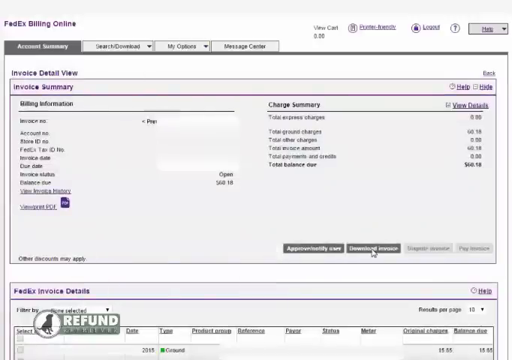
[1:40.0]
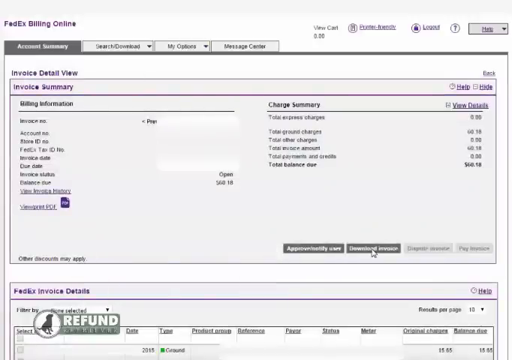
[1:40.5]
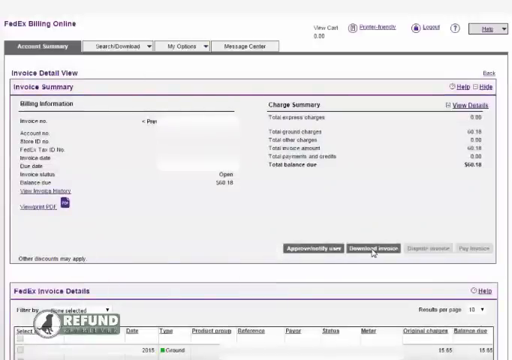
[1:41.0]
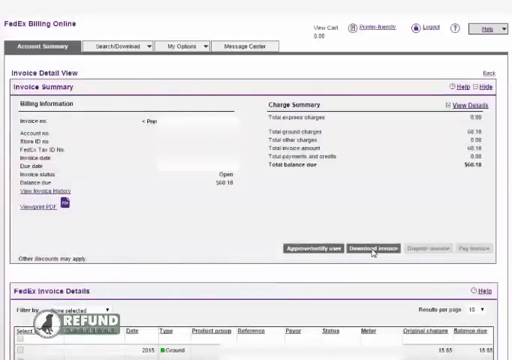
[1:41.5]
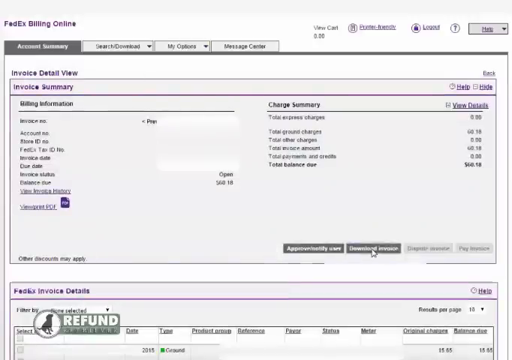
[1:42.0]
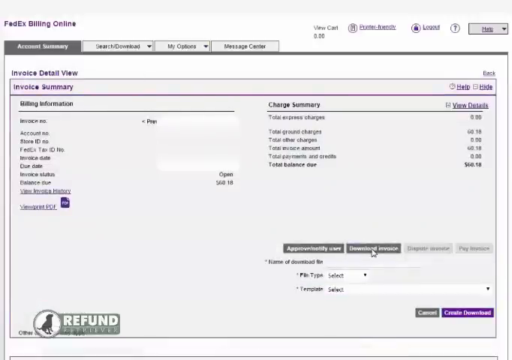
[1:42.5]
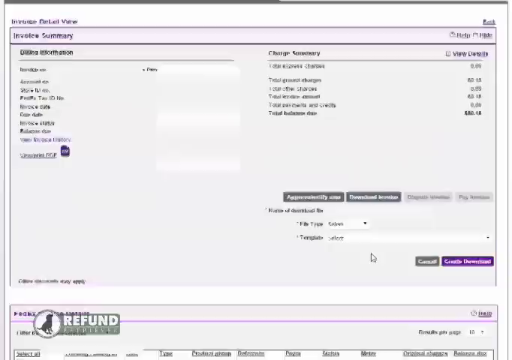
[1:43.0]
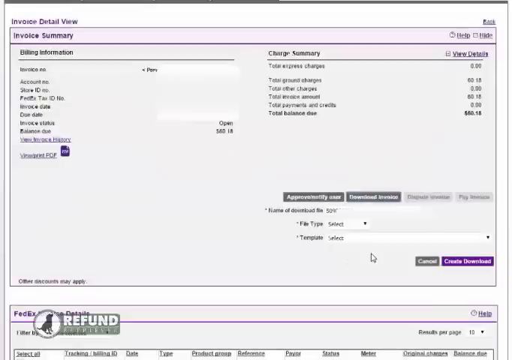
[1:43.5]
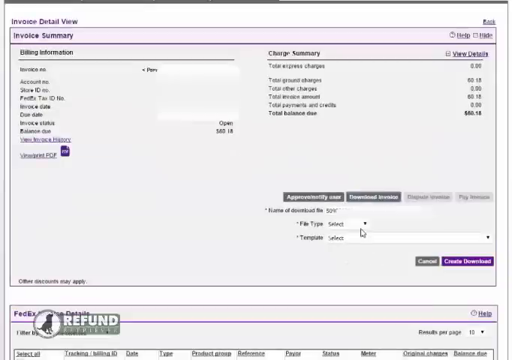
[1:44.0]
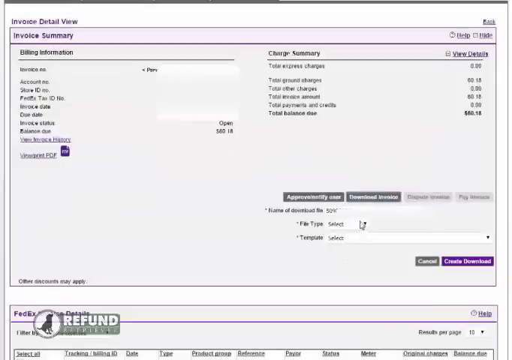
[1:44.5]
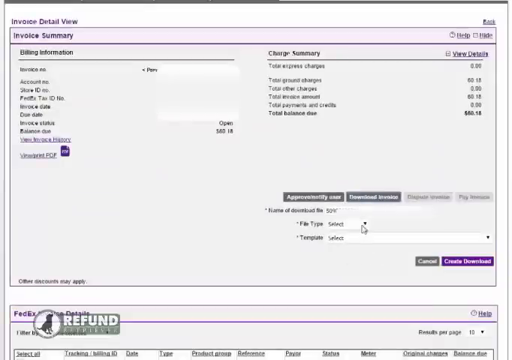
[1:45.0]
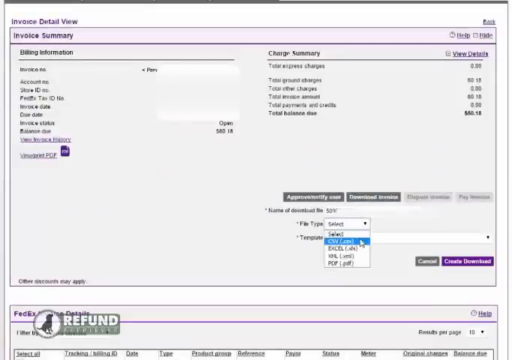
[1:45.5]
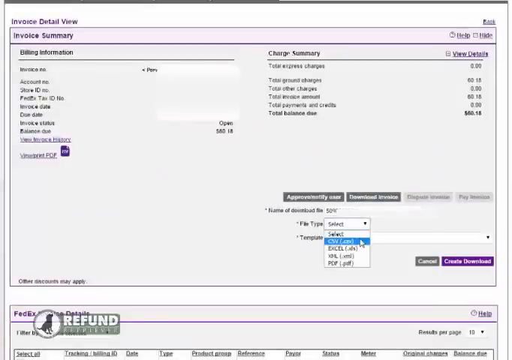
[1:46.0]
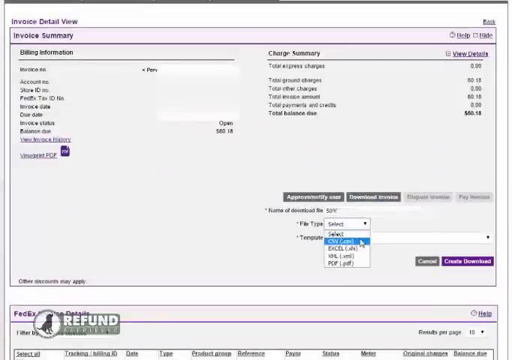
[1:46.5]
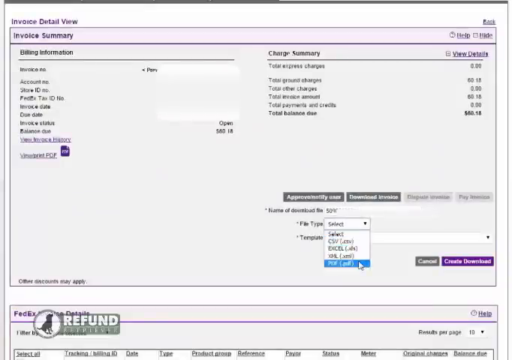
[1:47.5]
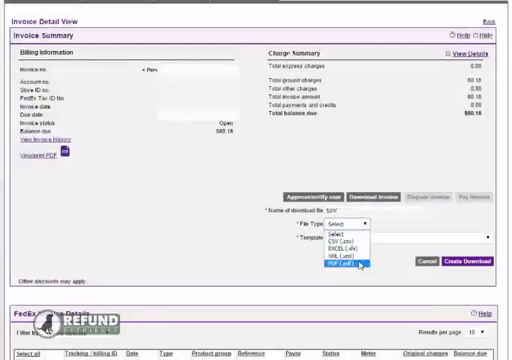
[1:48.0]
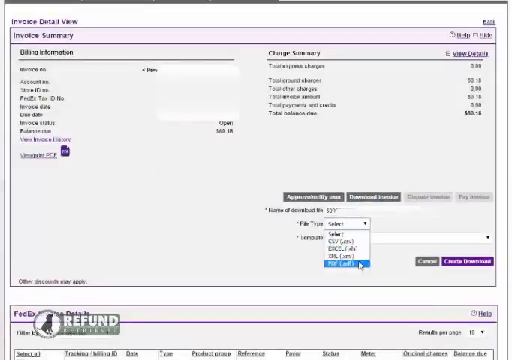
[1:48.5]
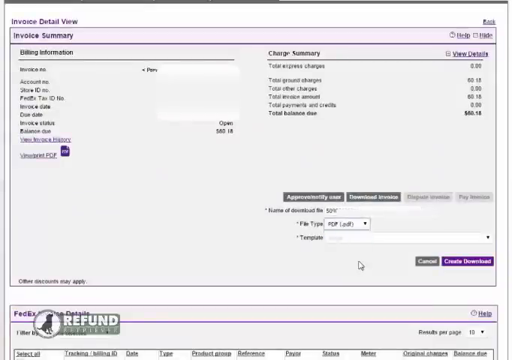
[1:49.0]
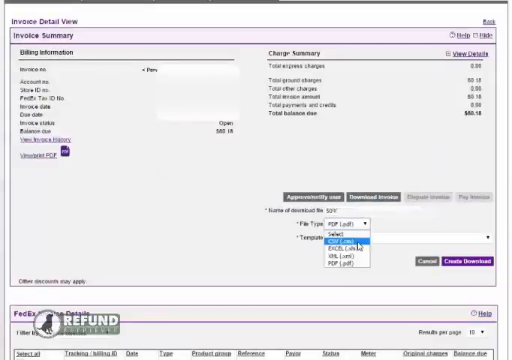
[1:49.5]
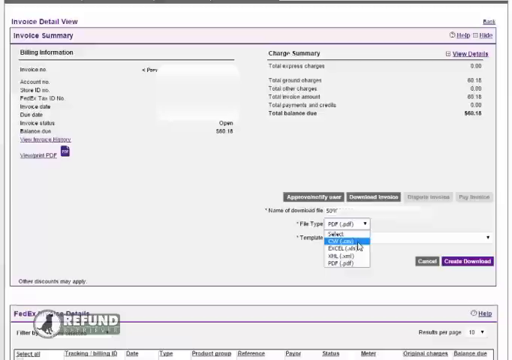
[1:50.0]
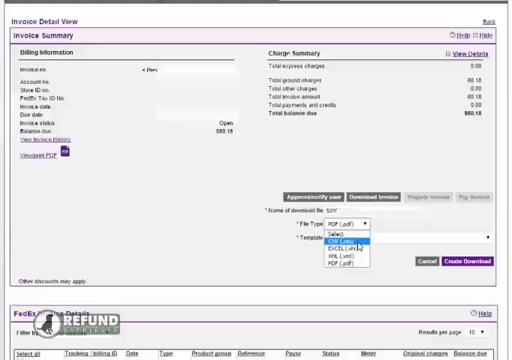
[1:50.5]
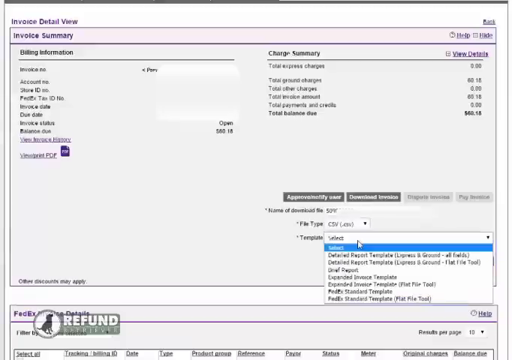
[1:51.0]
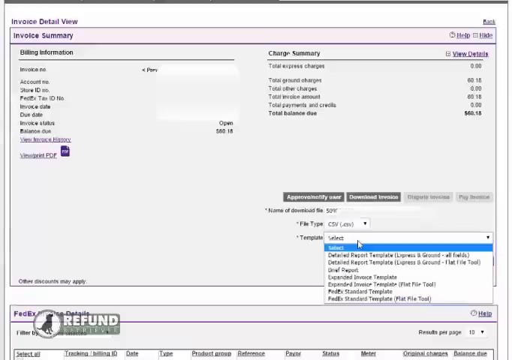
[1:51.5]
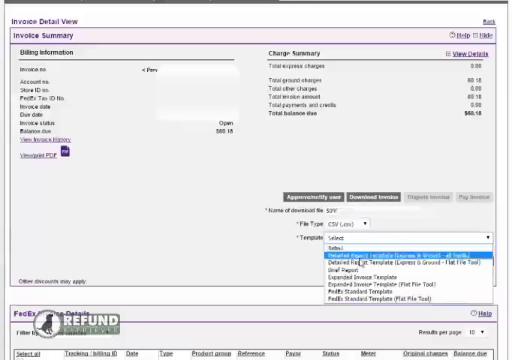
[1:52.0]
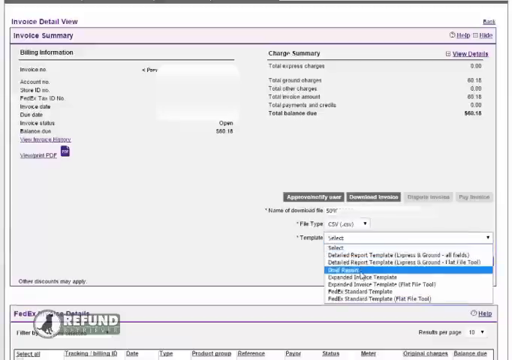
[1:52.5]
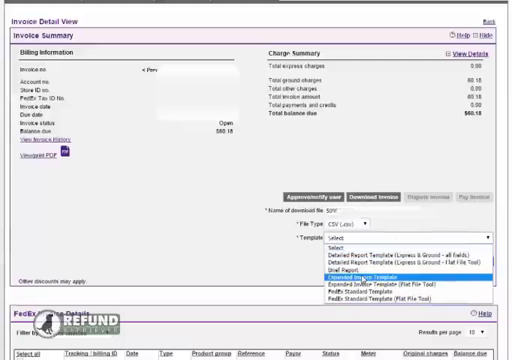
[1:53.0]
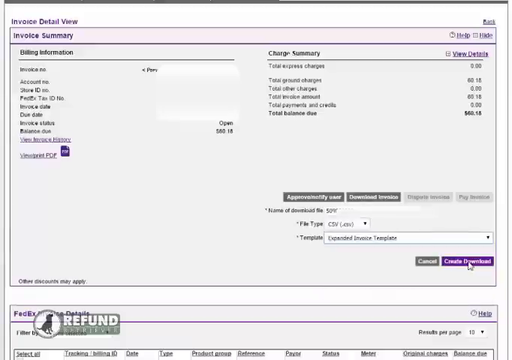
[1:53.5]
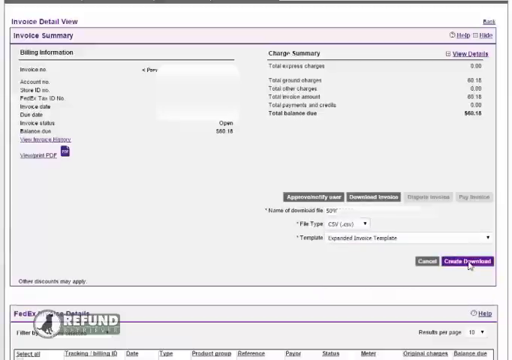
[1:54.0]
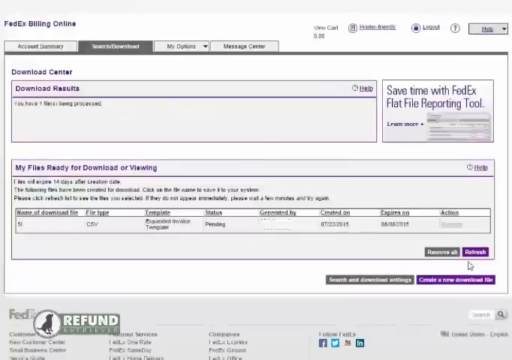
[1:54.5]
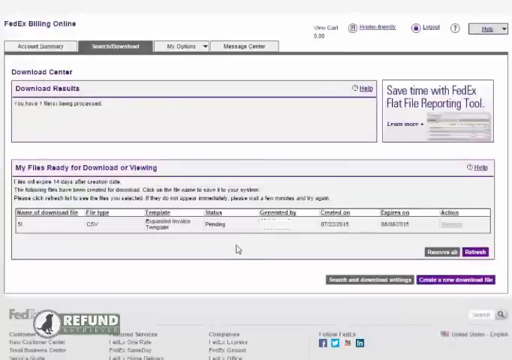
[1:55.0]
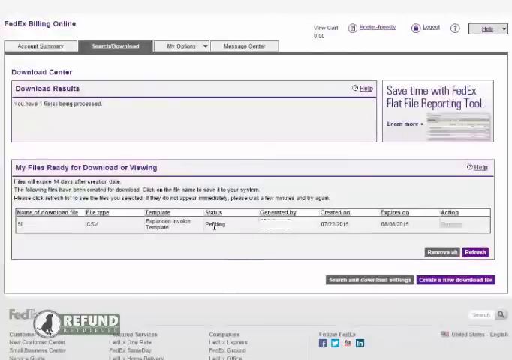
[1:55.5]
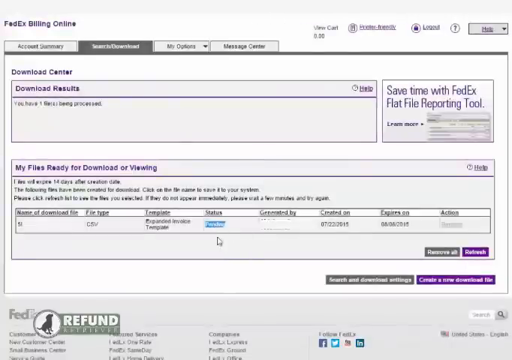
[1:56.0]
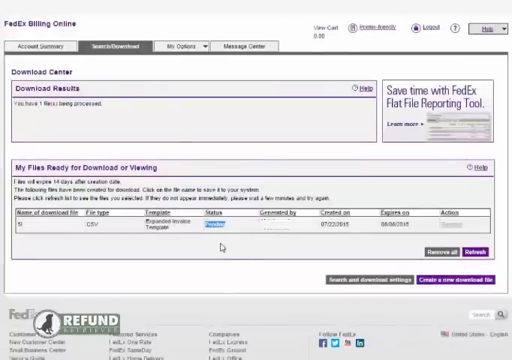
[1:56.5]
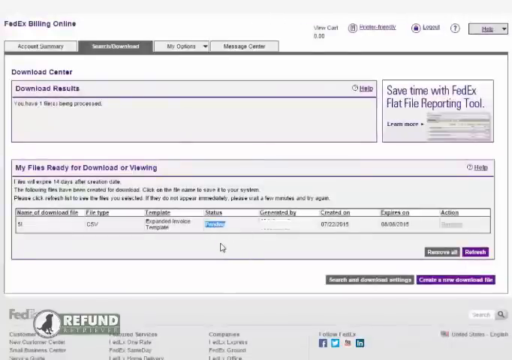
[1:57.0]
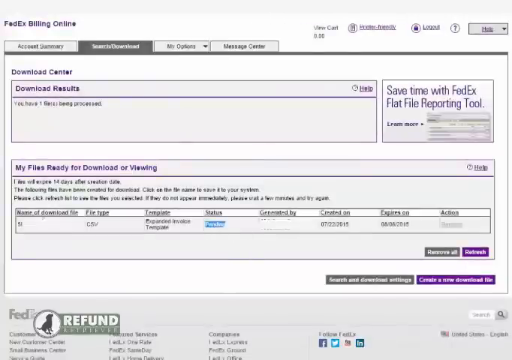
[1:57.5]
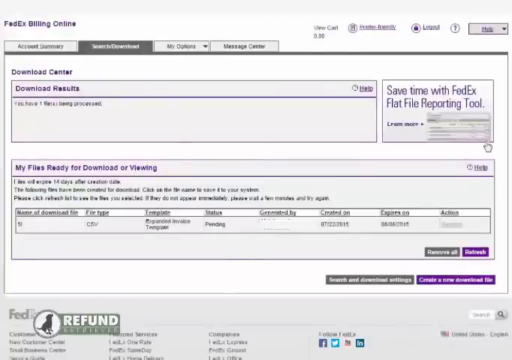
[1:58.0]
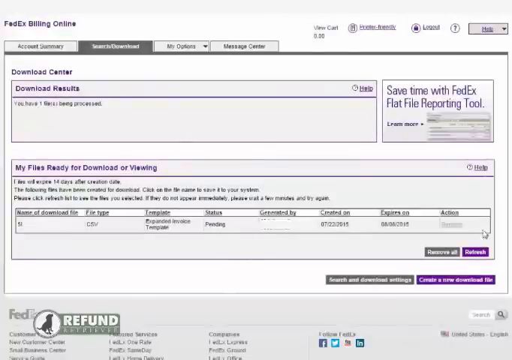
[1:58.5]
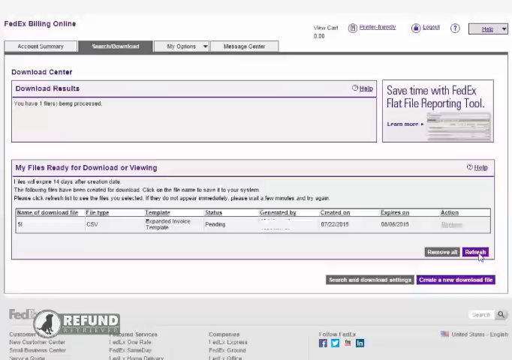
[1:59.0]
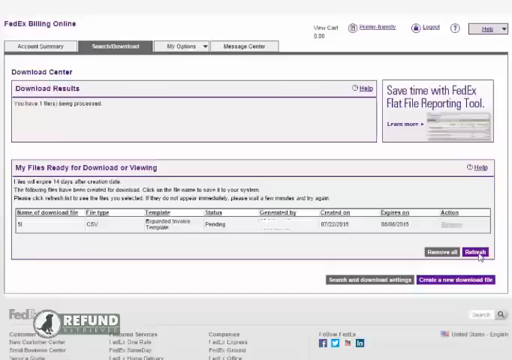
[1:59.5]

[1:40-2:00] A FedEx page has a header at the top that says "FedEx billing online," with four tabs underneath it. The user is on their invoice detail view, which has a purple header at the top that says "invoice summary." They click on a drop-down menu labeled "file type," and a menu with a lot of options pops up; the option under the cursor is highlighted in blue, and they select one. Below that, black text says "template," and they click on the drop-down menu there as well; options pop up and the one being hovered over is light blue. After they click it, the cursor hovers over a purple button in the lower left corner and clicks it. The site navigates to a page that says "download center." The user highlights the text underneath a category that says "status," then clicks a purple button on the left side of the screen, and it navigates to another window.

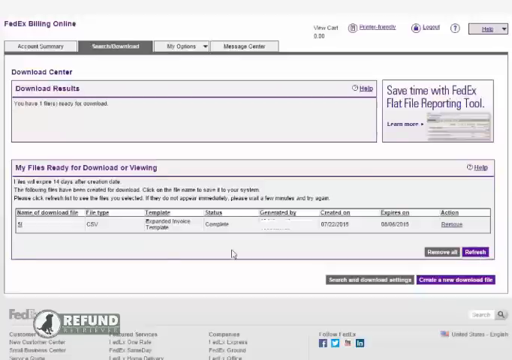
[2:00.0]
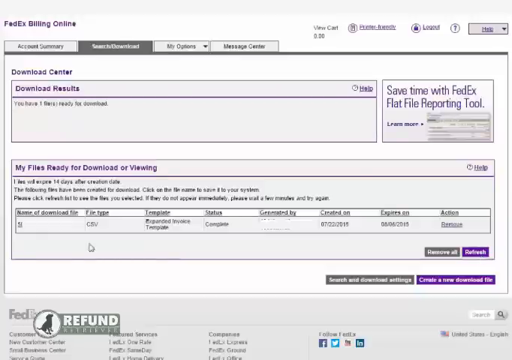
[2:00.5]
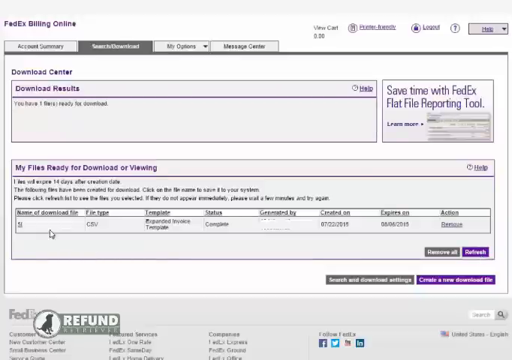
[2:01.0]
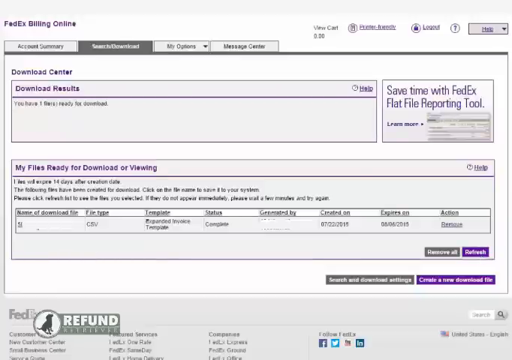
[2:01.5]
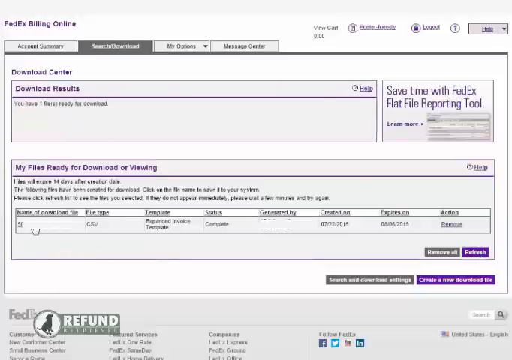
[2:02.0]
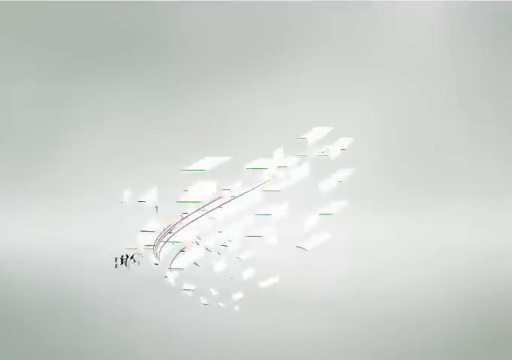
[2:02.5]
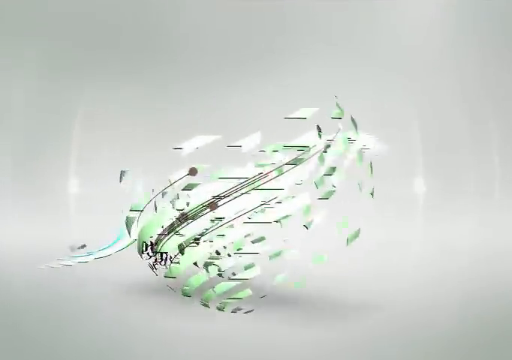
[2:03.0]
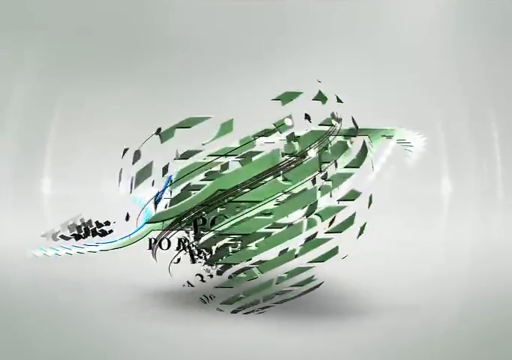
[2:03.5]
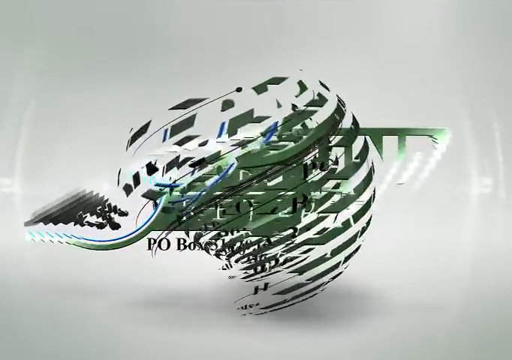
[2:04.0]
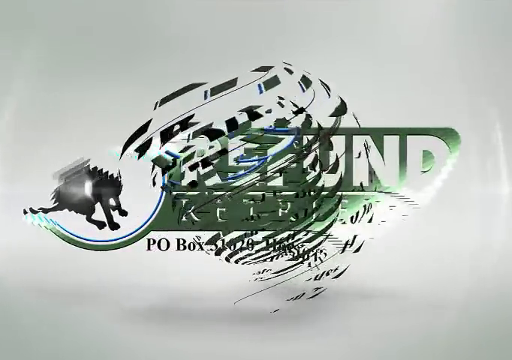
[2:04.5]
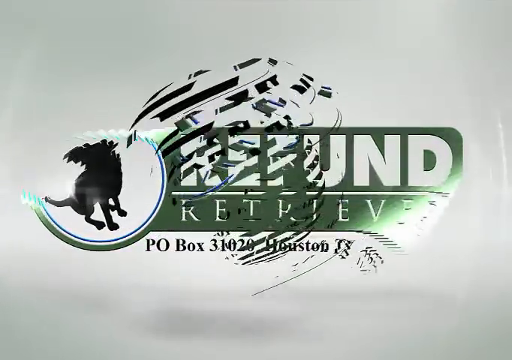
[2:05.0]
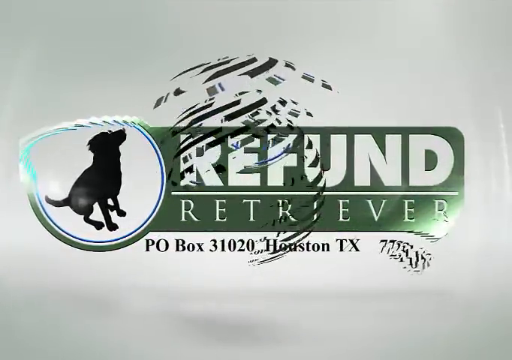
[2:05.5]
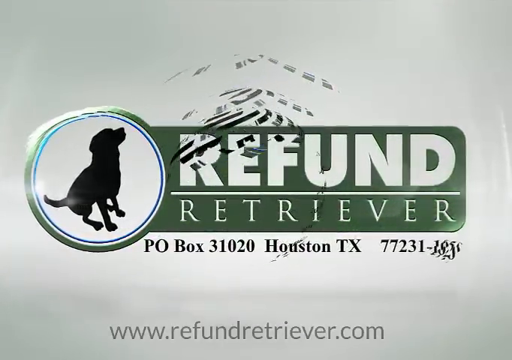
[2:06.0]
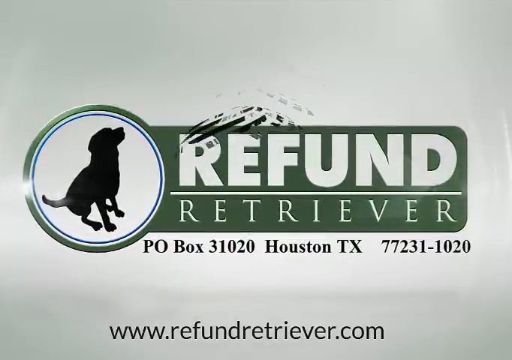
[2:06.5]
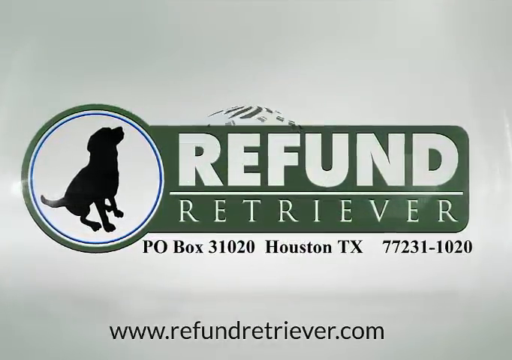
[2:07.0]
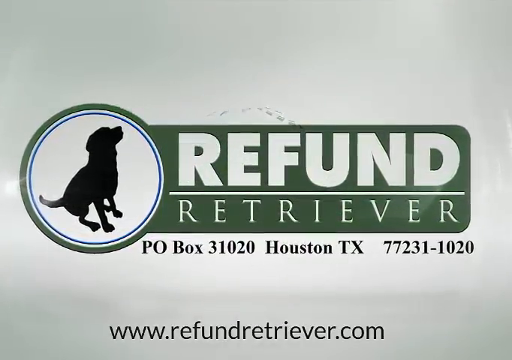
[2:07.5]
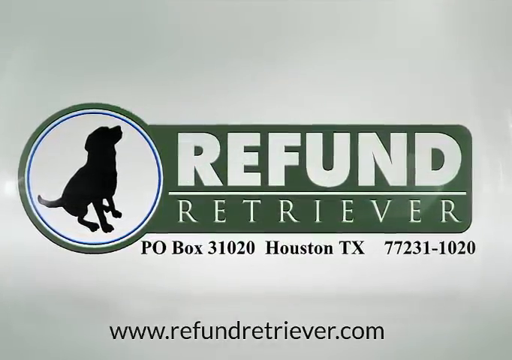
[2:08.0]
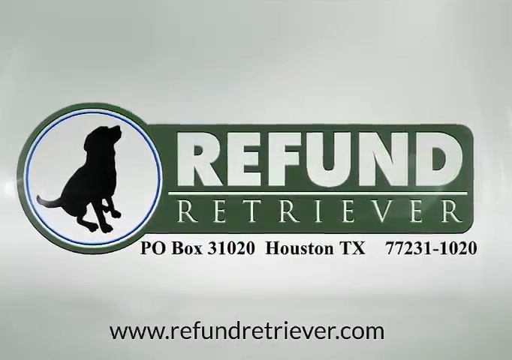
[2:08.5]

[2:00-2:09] The FedEx website shows "FedEx billing online" at the top left. There are four tabs, one highlighted in dark gray, and underneath is "download center" in purple text with black text below it. Another box underneath has a title that says "my file is ready to download or view," followed by more black text. In the lower right is a purple button that says "refresh" in white text, and underneath it is another button that says "create a new" followed by words that are hard to read, possibly "document file" or "download file." The page then goes away and a logo appears to be forming, kind of looking like a globe. In the foreground is white text that says "refund retriever" on a green background, with a silhouette of a dog on the left side, while a globe kind of spins in the background and disappears.